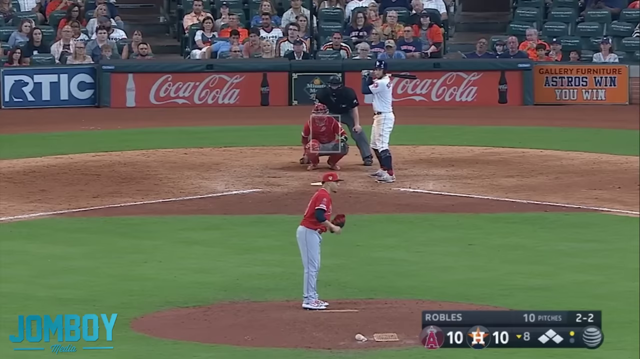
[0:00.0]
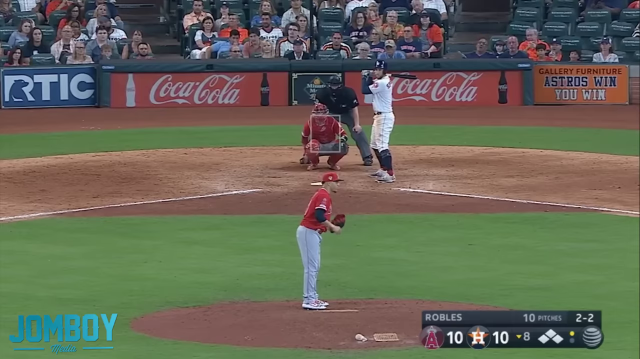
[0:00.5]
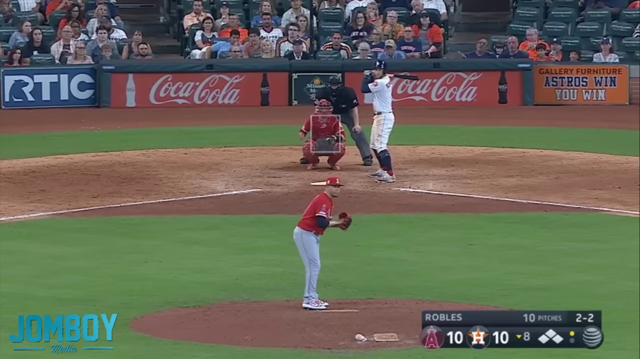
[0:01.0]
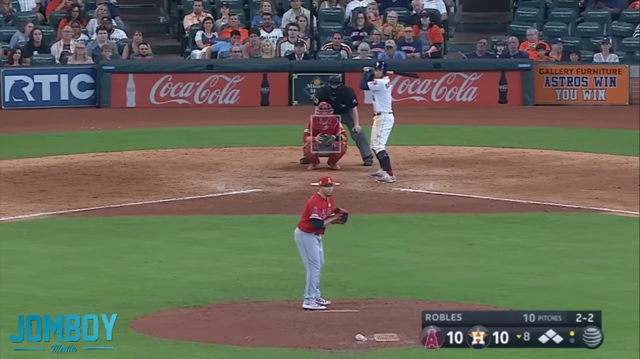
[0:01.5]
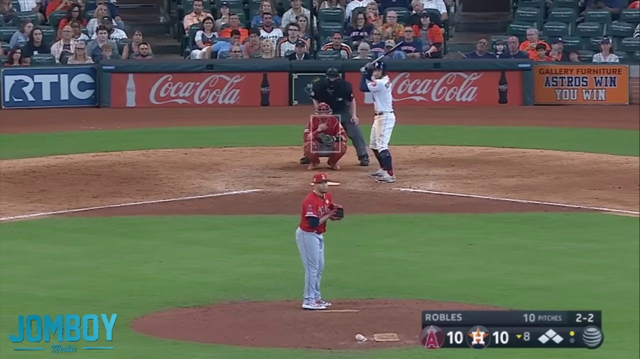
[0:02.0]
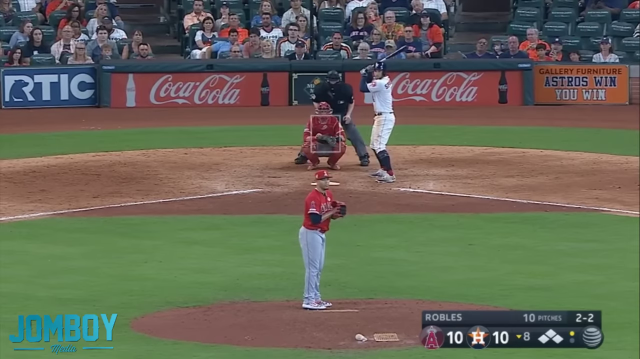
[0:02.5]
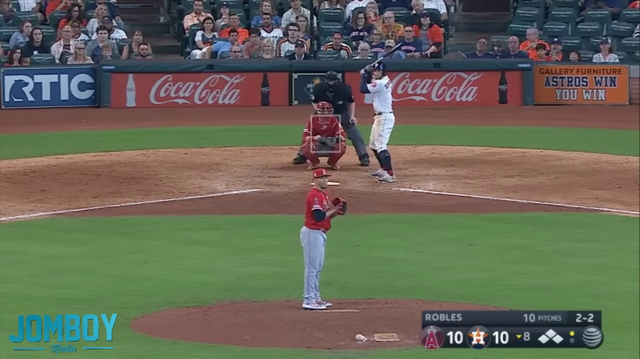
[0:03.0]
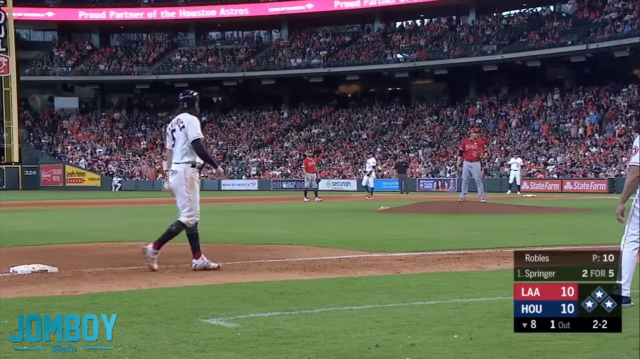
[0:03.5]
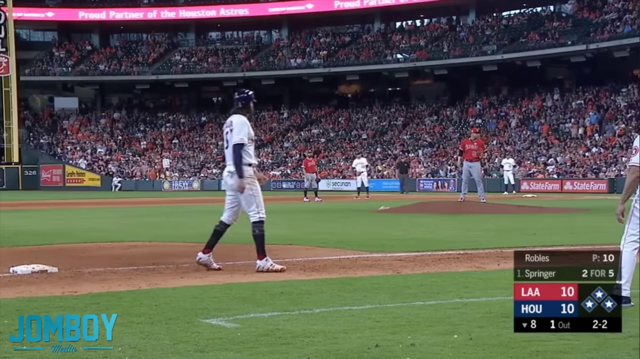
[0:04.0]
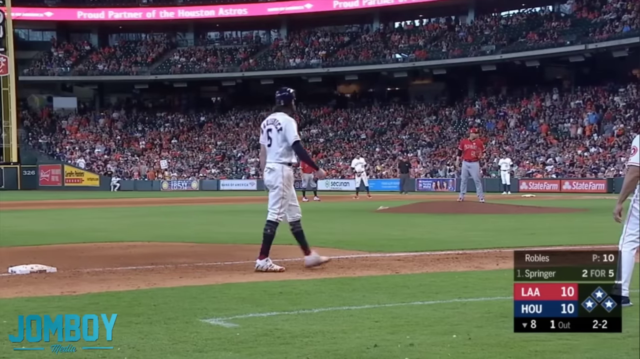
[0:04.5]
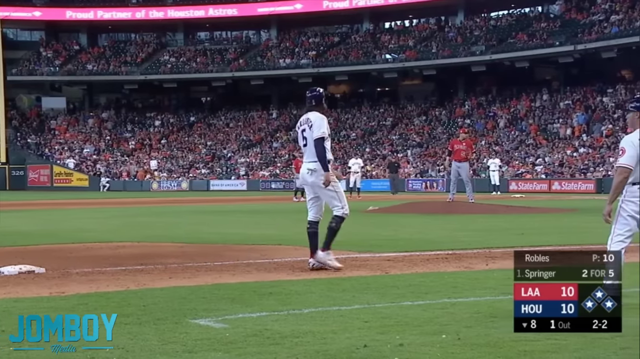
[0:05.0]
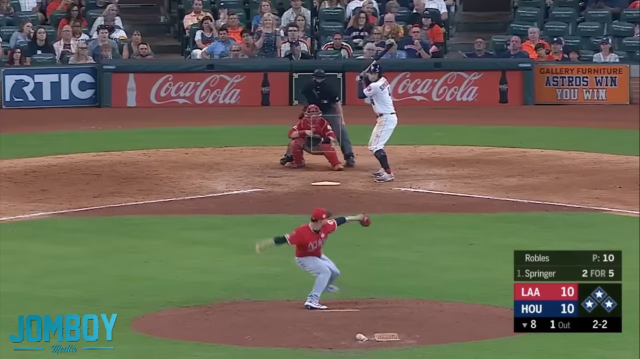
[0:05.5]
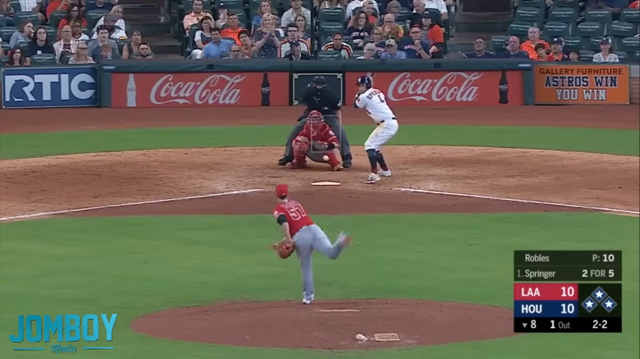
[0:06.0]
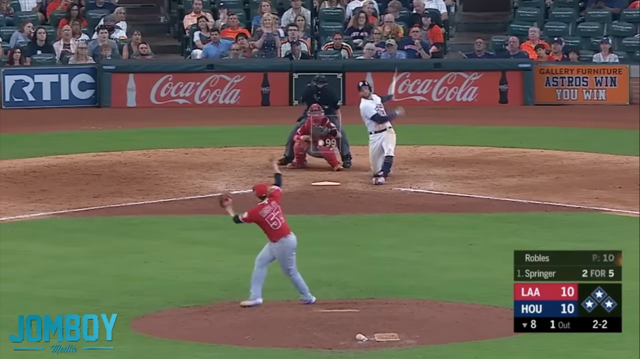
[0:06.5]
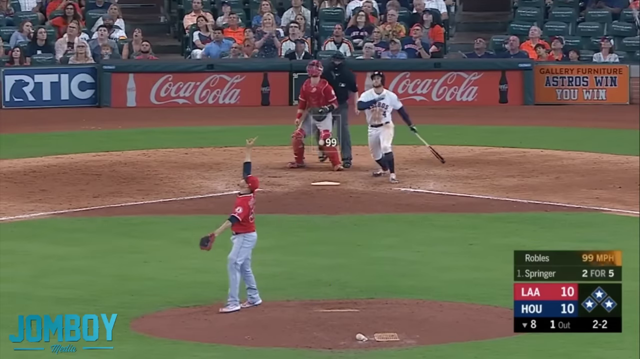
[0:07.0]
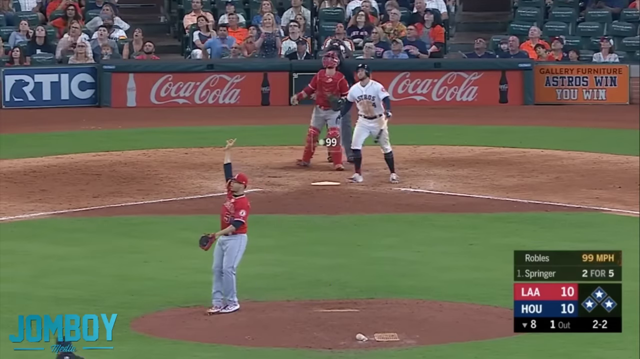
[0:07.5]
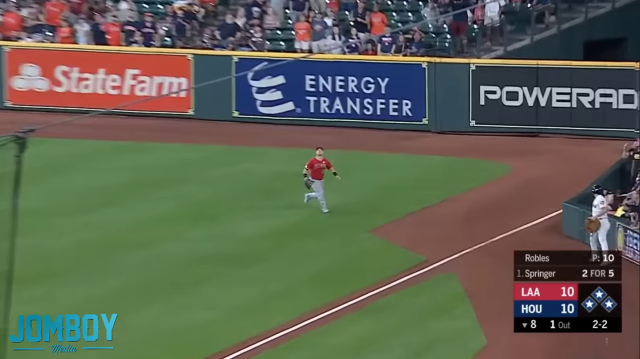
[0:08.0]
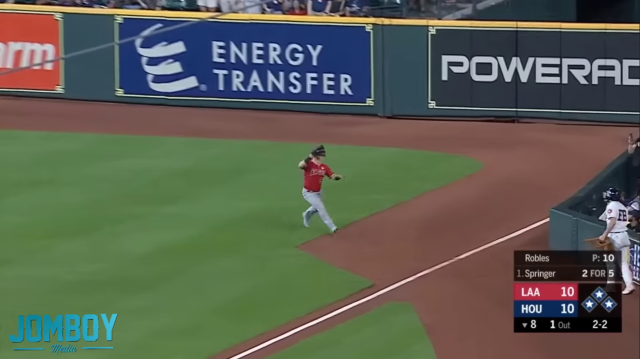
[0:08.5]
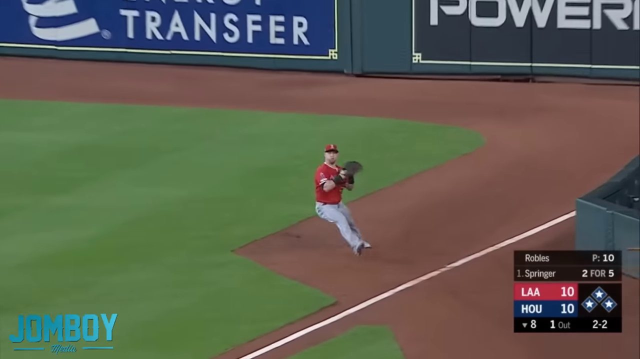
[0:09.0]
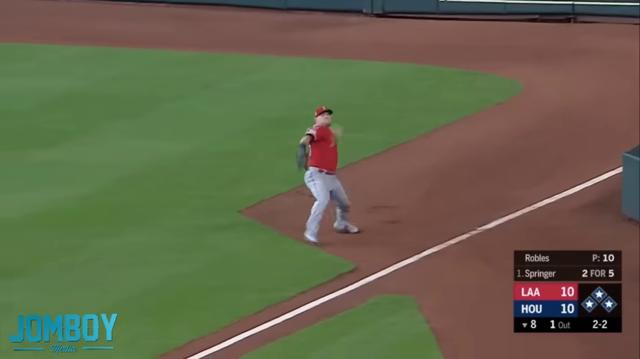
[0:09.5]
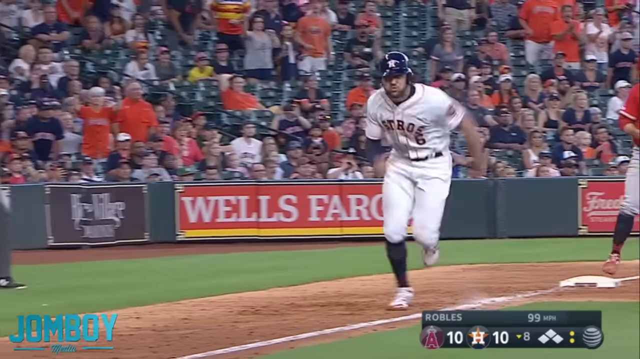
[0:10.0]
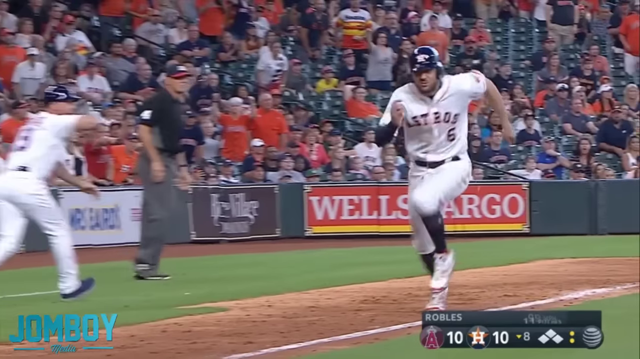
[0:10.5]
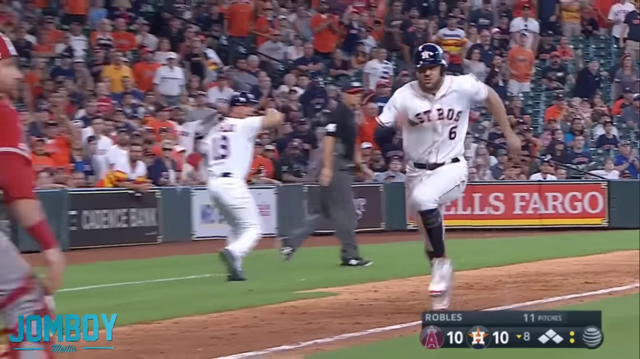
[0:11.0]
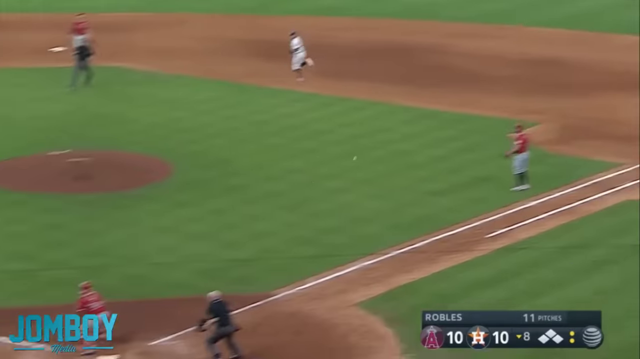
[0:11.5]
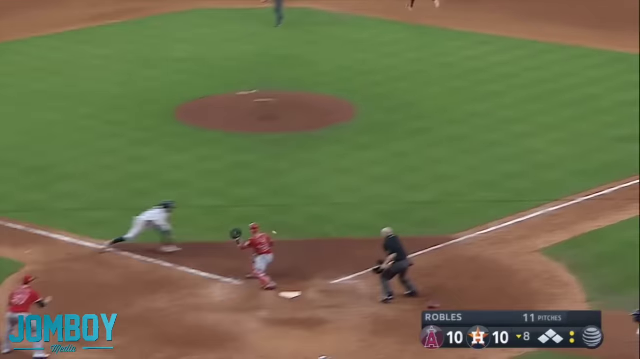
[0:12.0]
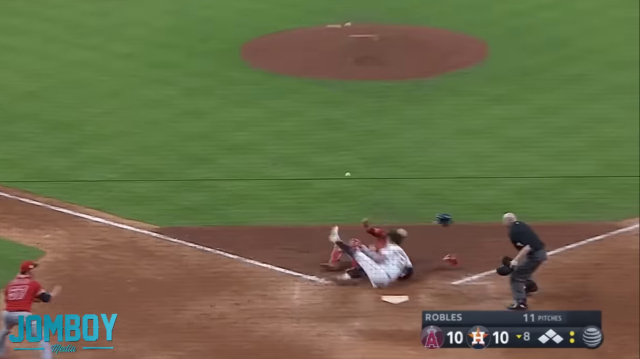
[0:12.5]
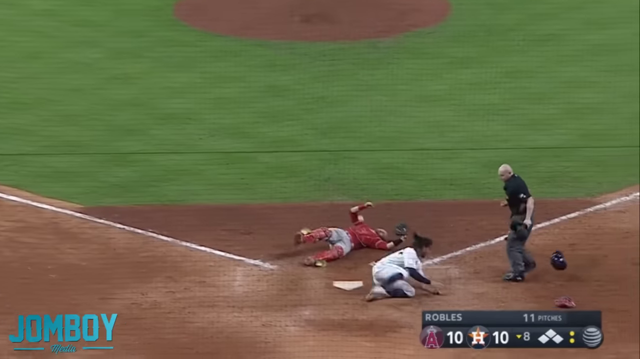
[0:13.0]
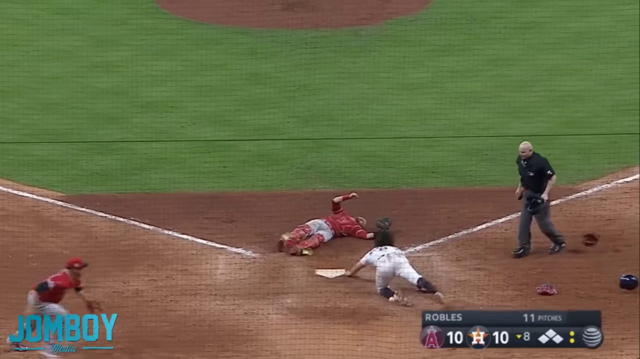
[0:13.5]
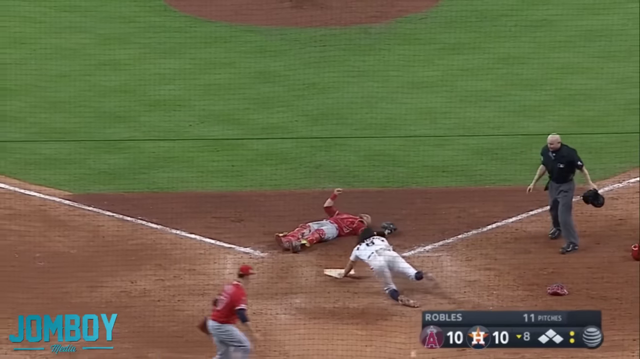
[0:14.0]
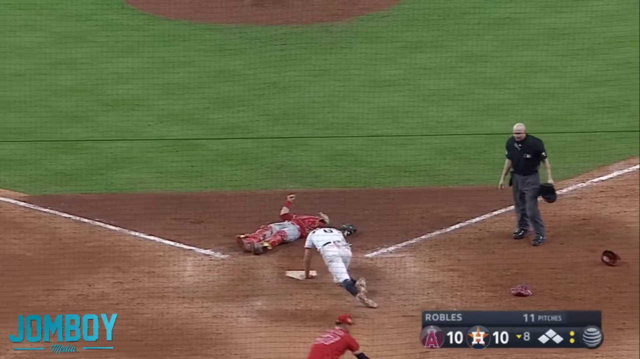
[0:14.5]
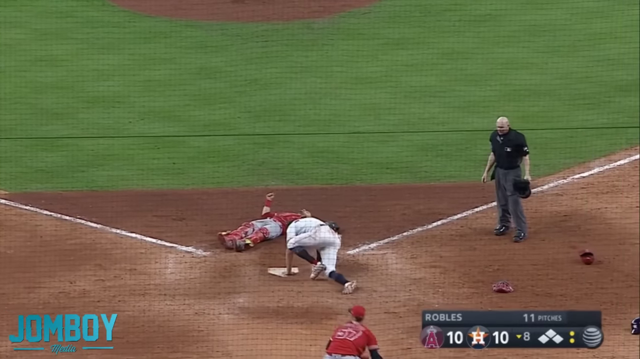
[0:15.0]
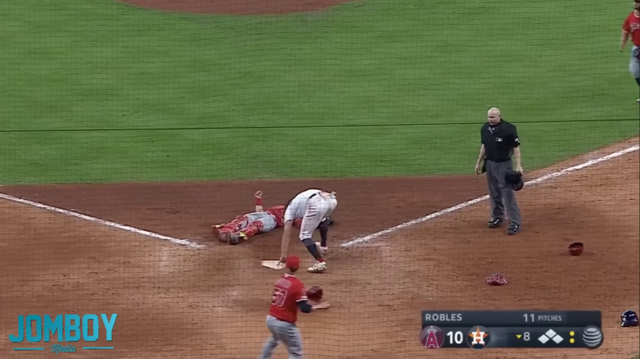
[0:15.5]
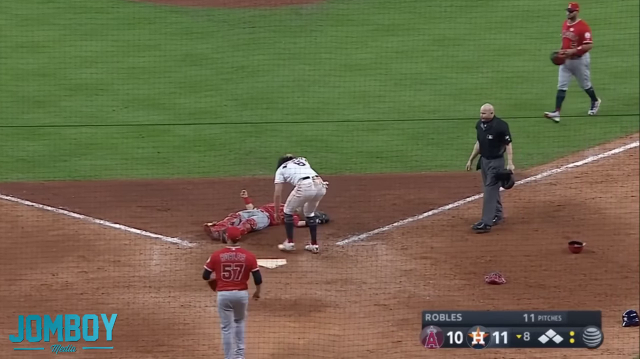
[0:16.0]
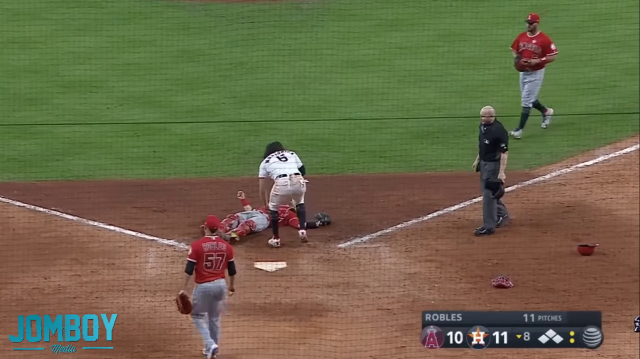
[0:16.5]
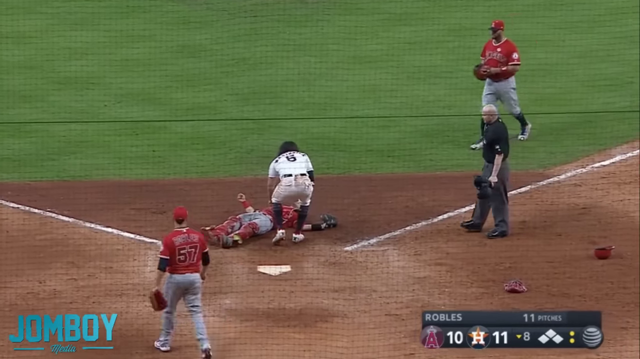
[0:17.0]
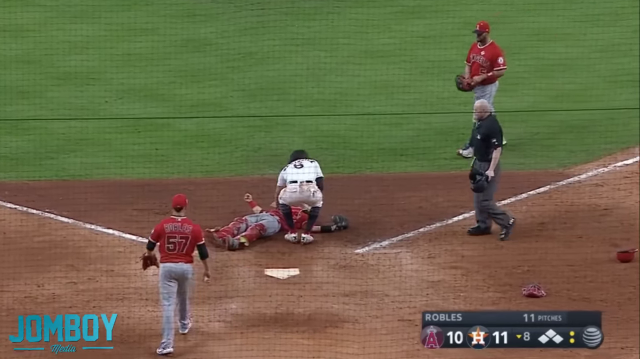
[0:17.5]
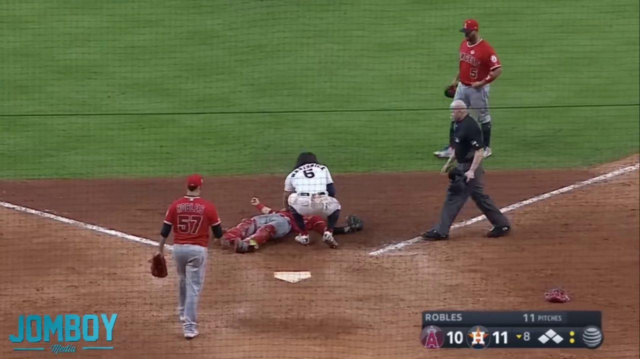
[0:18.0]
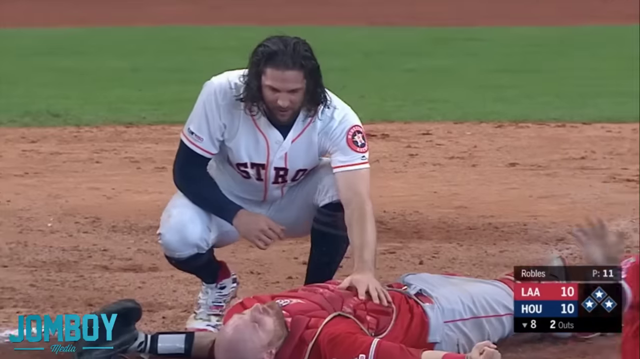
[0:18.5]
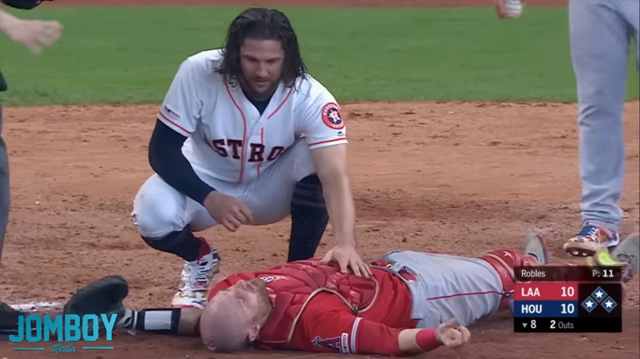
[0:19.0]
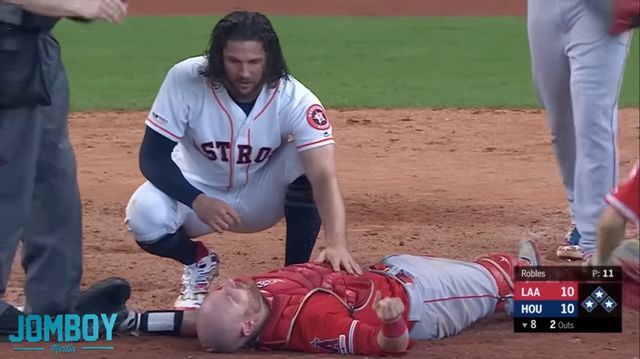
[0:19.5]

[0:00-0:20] A baseball game is shown, with the score in the lower right corner: "LAA" in white on a red background with "10", then "HOU 10". The footage is sped up. Advertisement signs read "Coca-Cola", "Gallery Furniture" and "Astros win, you win". A pitcher is about to throw the ball. An Astros player is running, and two players appear to crash into each other; it is unclear whether their heads hit. The one who was running toward home, trying to make it home, looks hurt. He has a red jersey on and is laid out on the field.